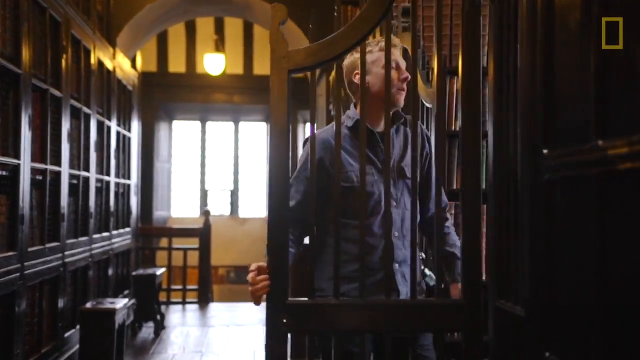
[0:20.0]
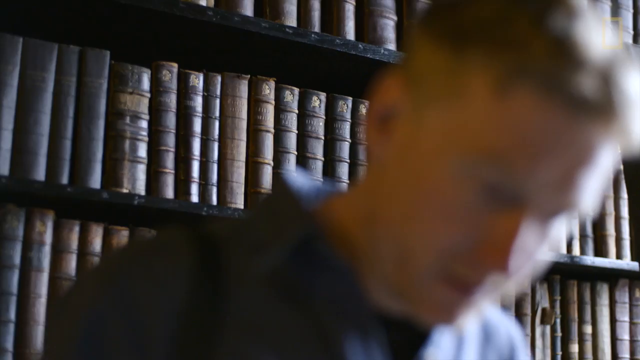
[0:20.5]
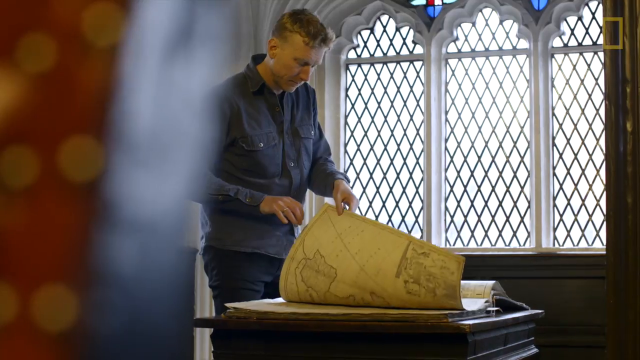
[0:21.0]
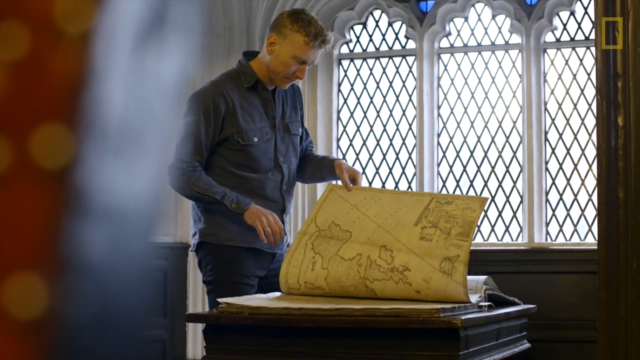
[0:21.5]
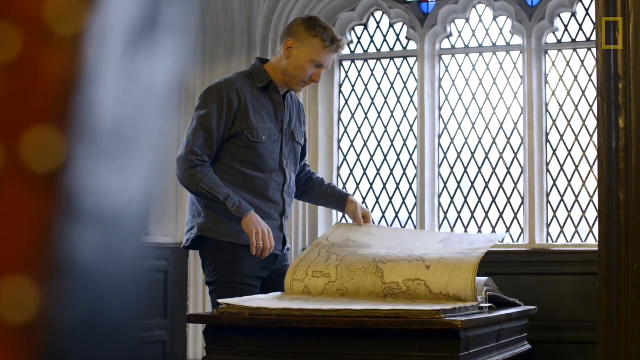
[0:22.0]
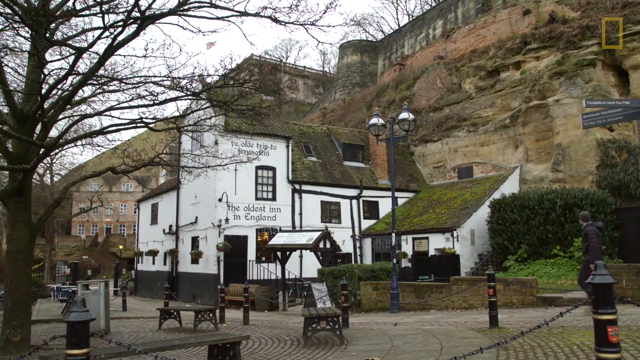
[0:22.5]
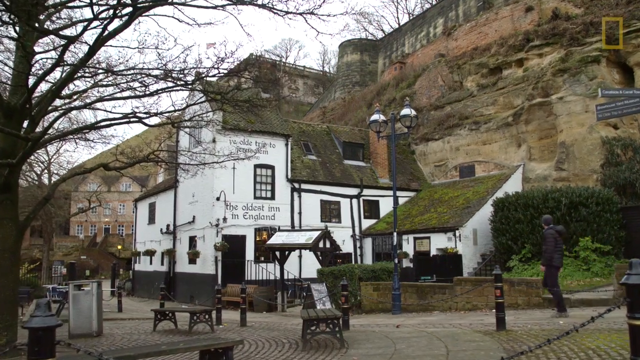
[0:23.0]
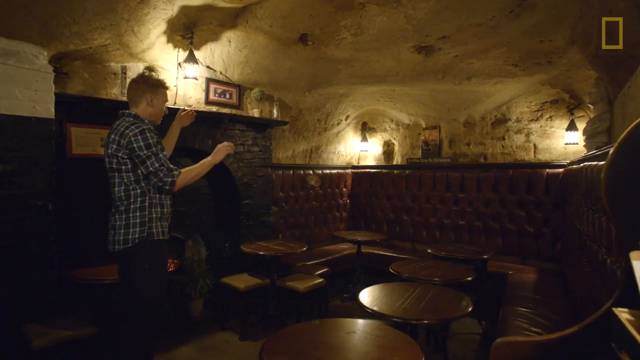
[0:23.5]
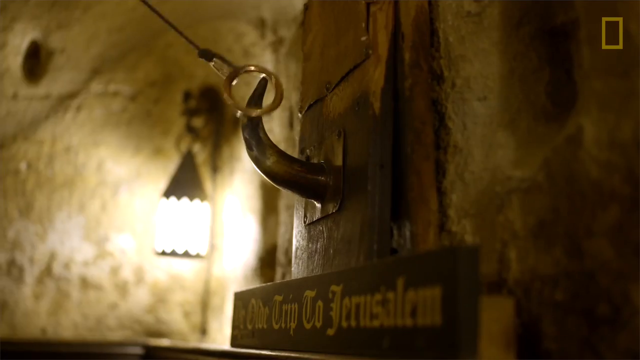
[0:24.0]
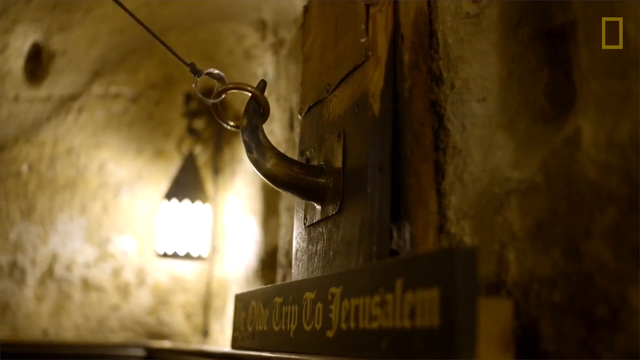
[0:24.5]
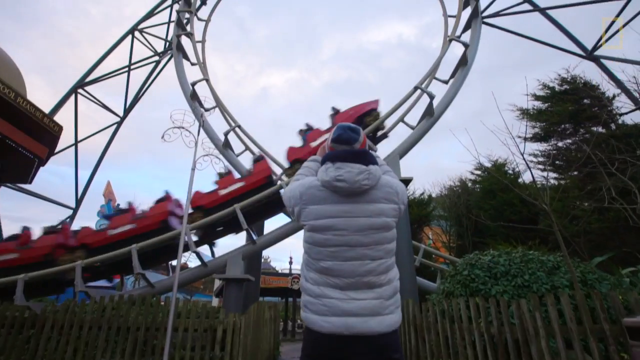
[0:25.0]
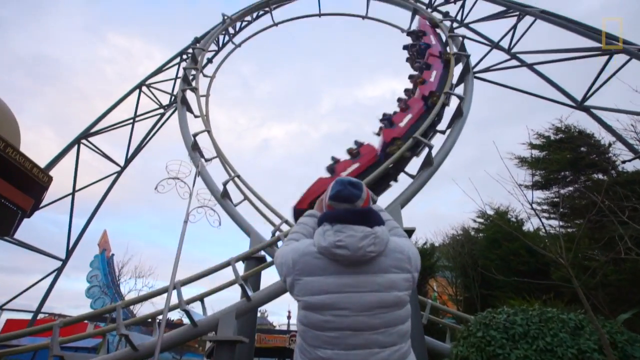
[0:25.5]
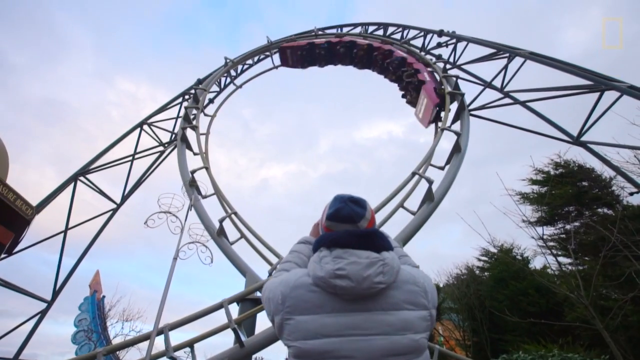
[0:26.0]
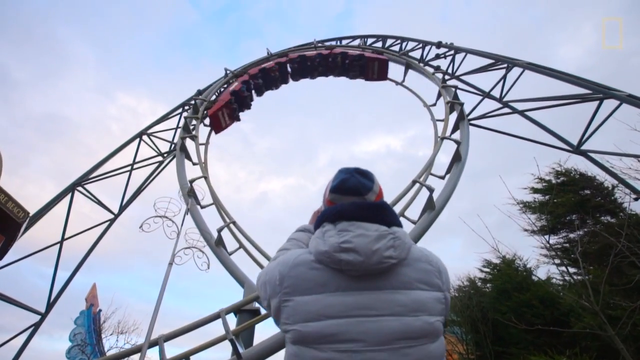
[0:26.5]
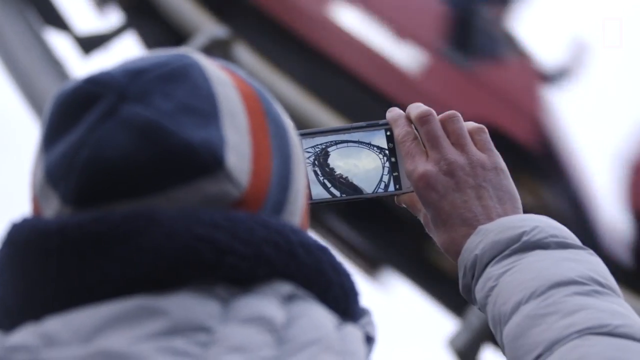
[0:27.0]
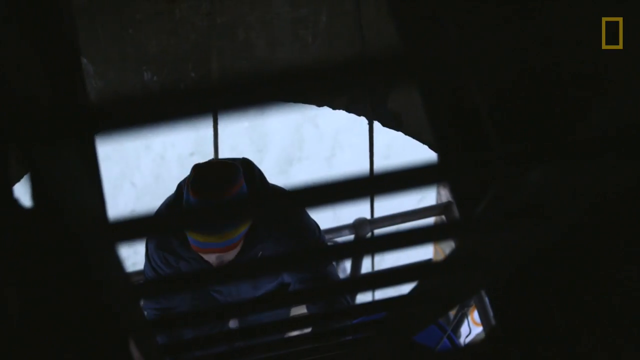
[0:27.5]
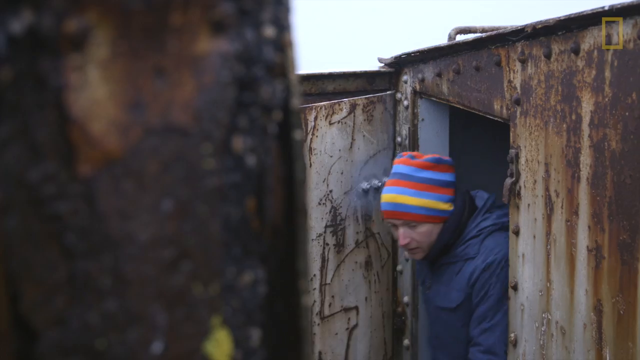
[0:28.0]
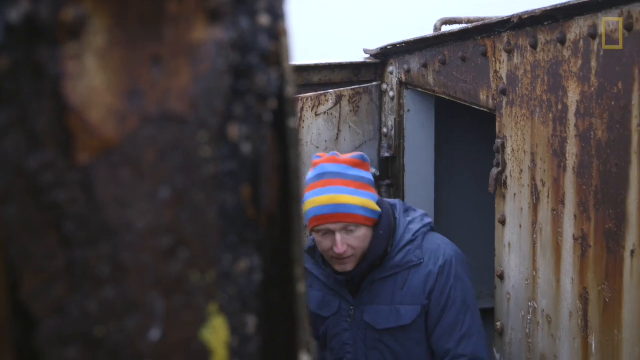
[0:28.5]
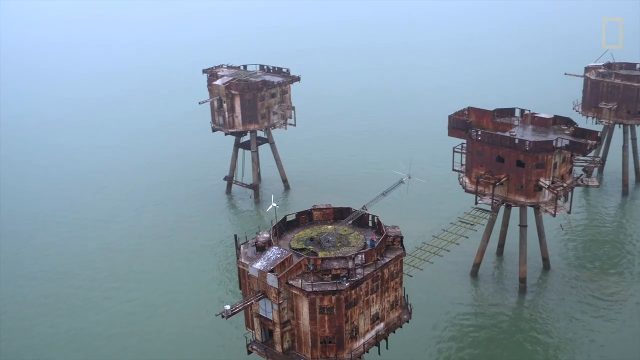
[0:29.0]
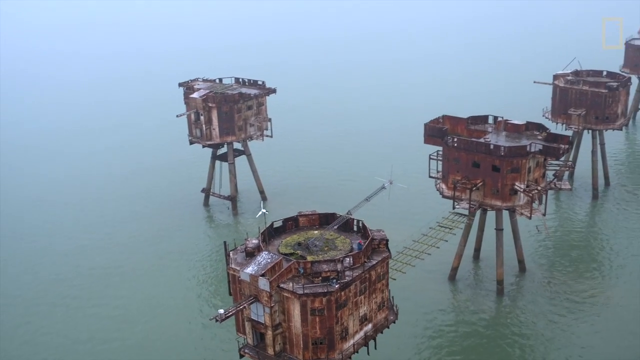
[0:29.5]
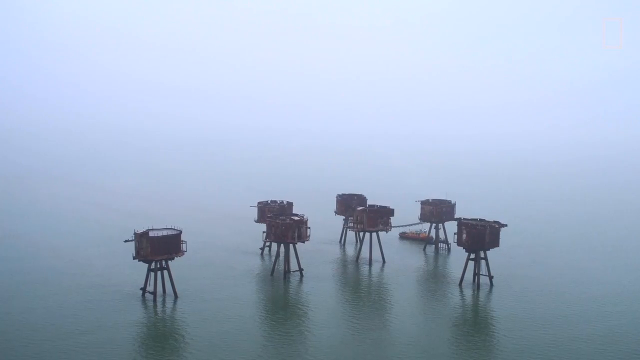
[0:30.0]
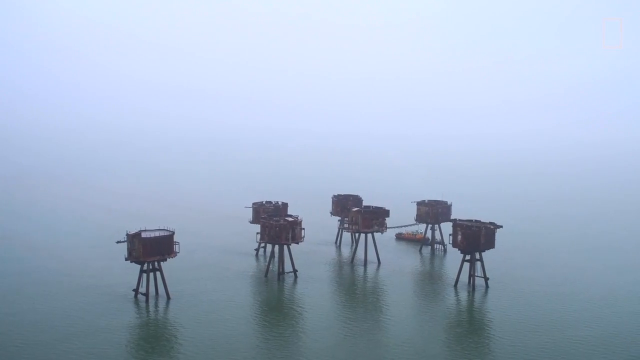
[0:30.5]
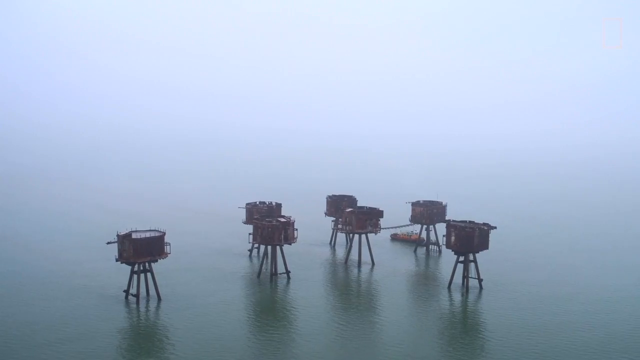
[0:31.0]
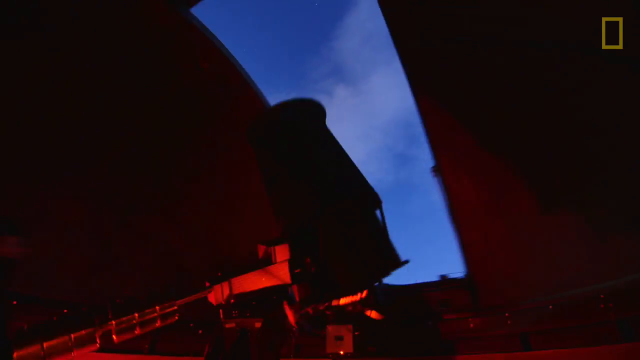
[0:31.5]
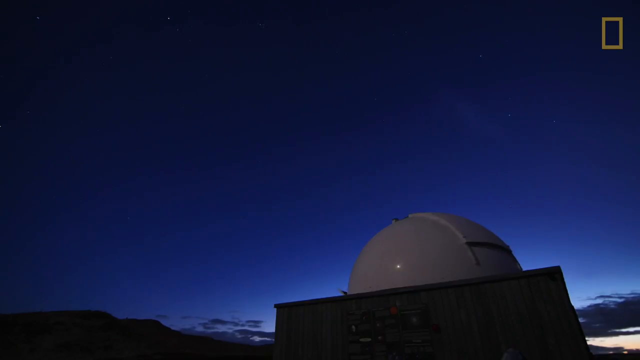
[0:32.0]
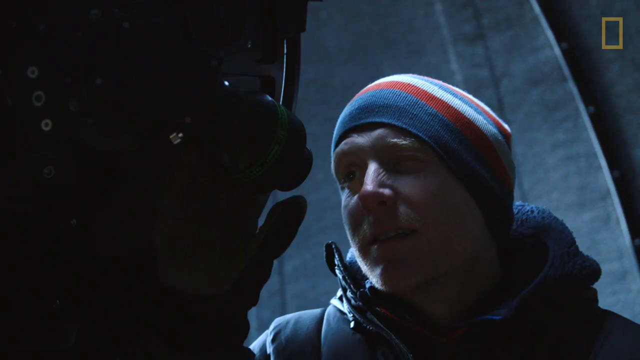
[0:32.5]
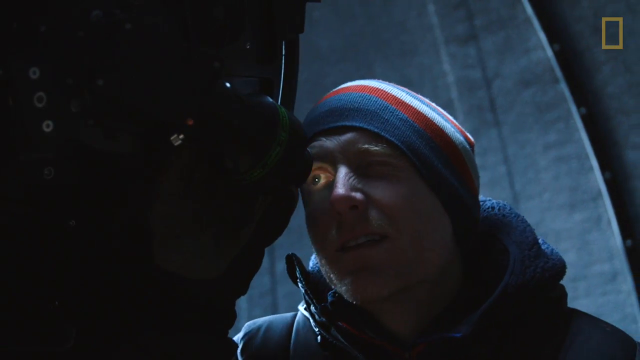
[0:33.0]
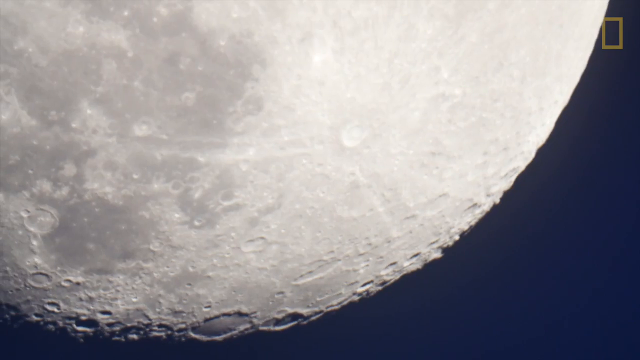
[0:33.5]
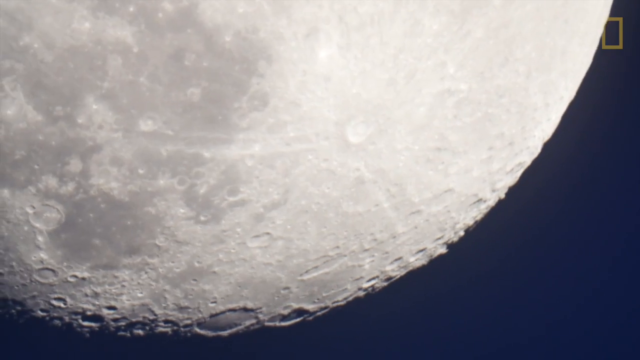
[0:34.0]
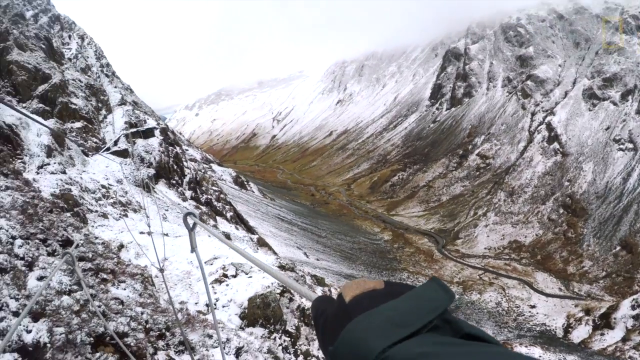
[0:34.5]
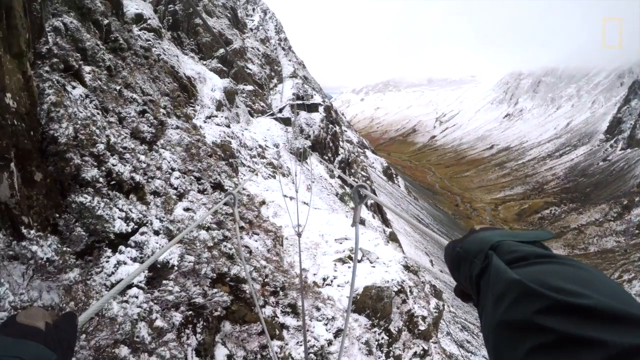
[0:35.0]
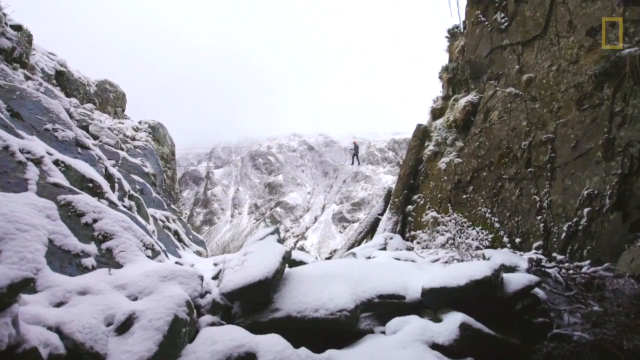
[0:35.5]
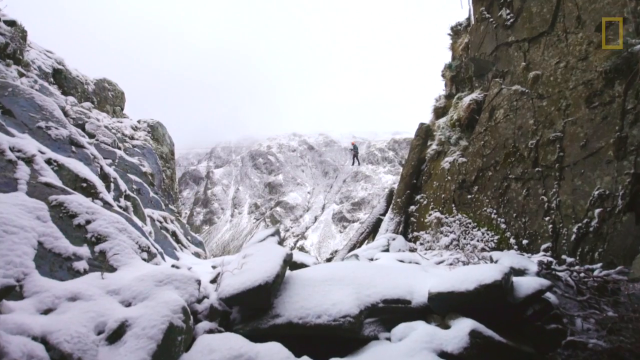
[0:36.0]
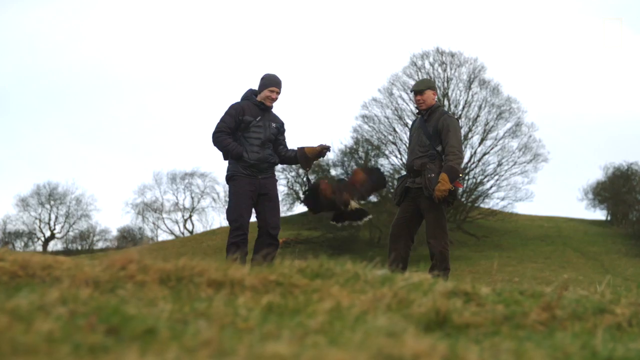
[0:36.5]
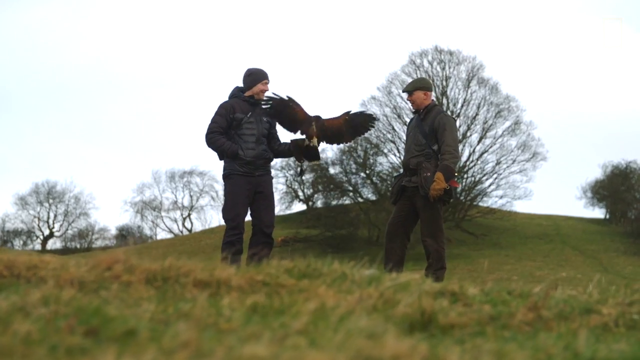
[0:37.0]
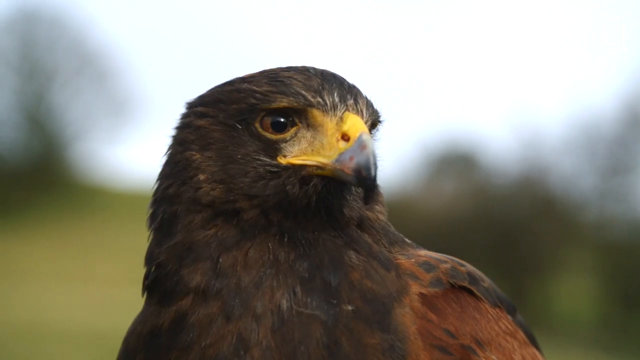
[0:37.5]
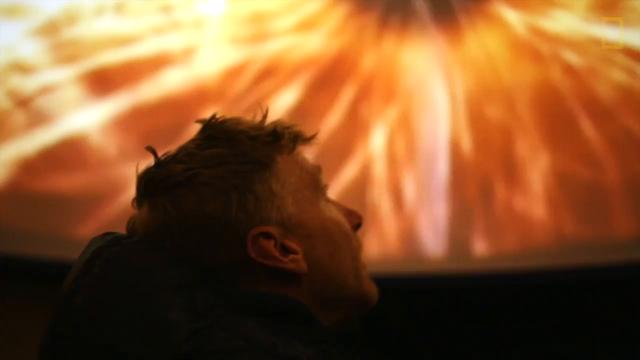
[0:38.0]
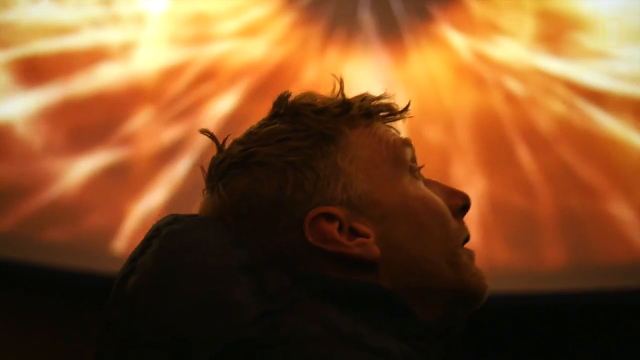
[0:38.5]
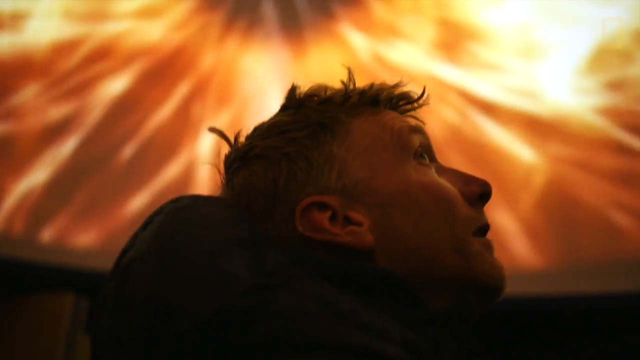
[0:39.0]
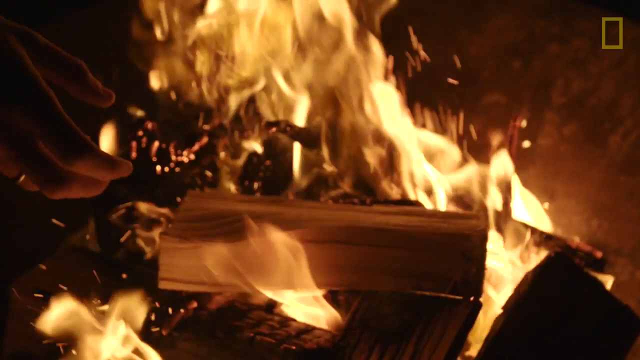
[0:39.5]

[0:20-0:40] The man appears to walk into a confessional booth, and then he is in a large library looking through maps. In a pub he plays a vintage-type pub game, letting go of a ring attached to a string to try to catch it on a hook hanging on the wall. At a theme park he films a roller coaster going around in circles; the roller coaster comes in from the left of the screen, goes up, makes a full circle, comes down and exits the screen to the right. He is seen in different places, including the towers out in the ocean off the coast of Great Britain that were used as military installations during World War II and are no longer in use. He is in a huge satellite pointed up at the moon, getting a view of the moon through it. Later he is in a field working with birds and building a campfire.